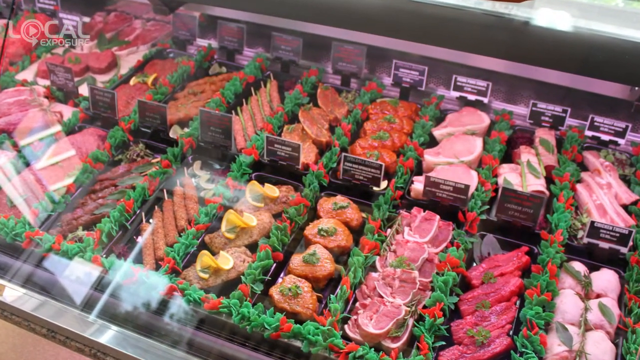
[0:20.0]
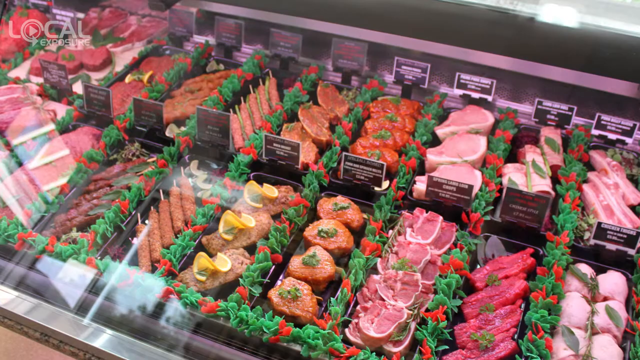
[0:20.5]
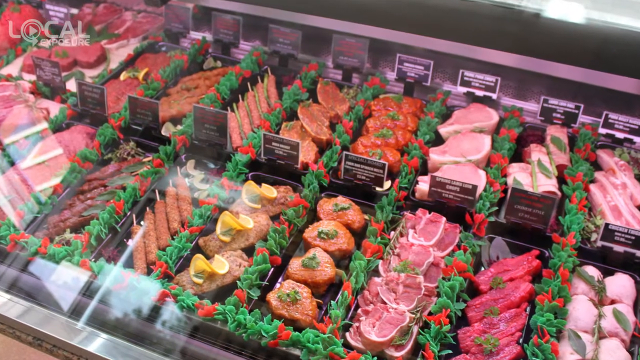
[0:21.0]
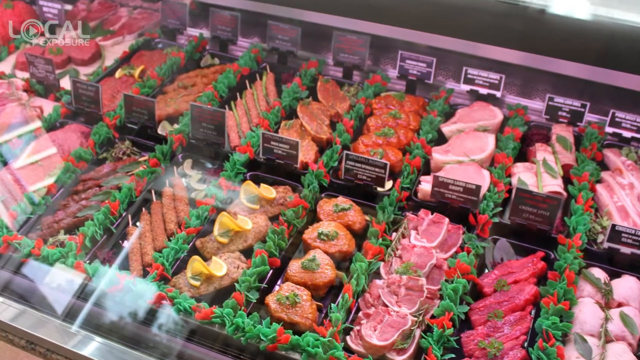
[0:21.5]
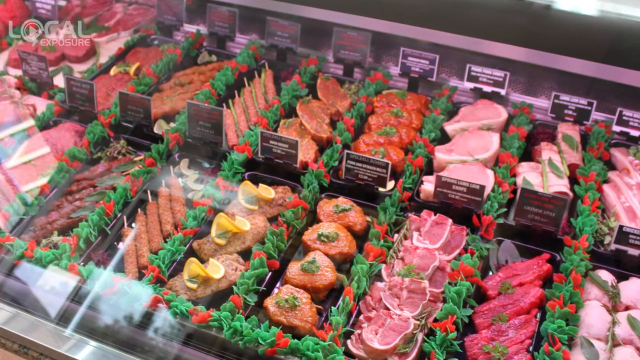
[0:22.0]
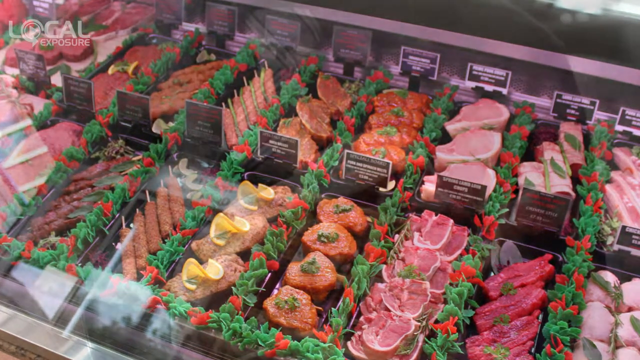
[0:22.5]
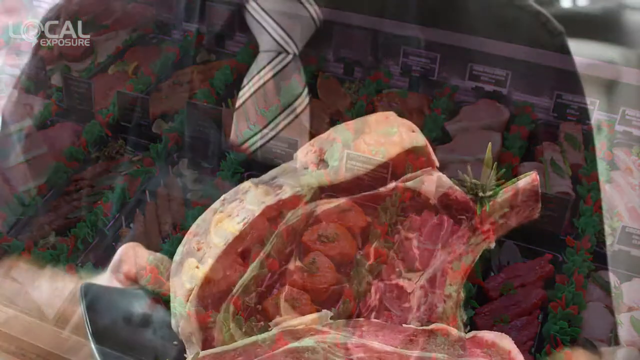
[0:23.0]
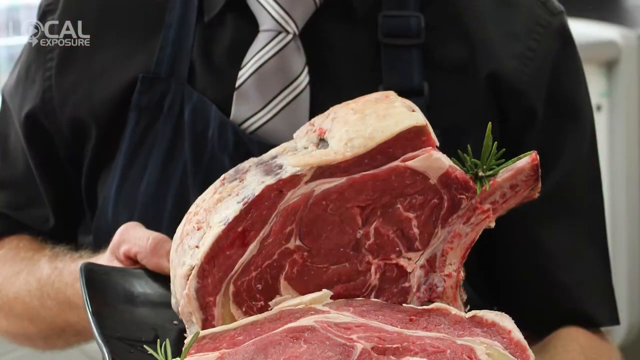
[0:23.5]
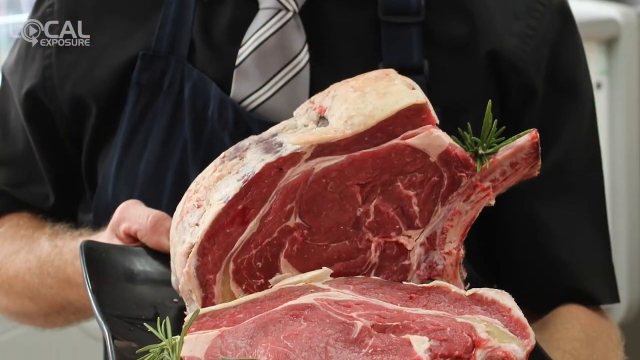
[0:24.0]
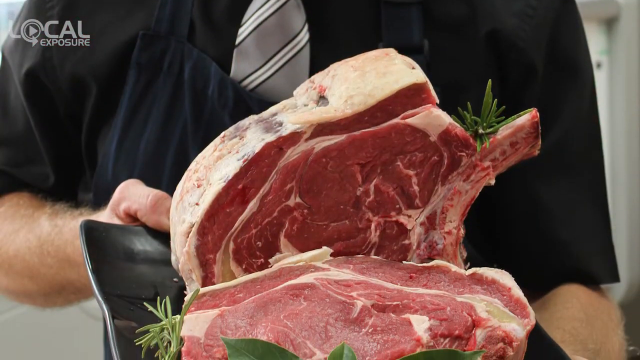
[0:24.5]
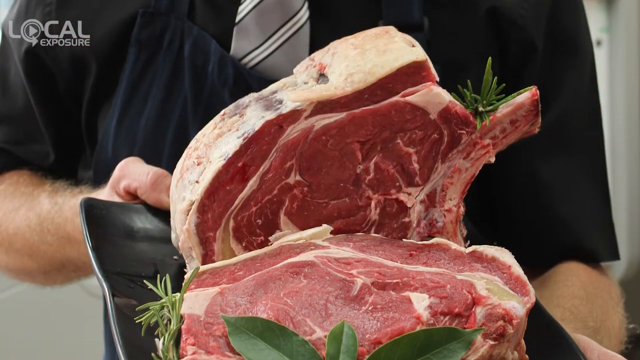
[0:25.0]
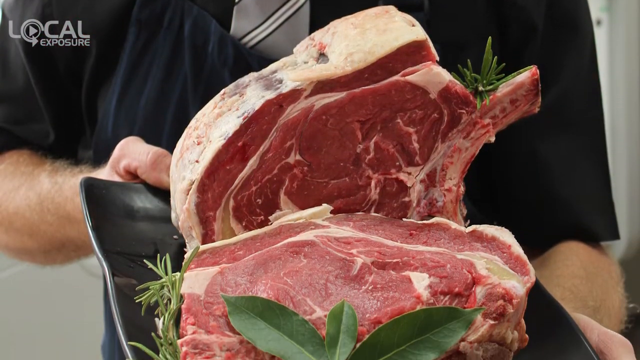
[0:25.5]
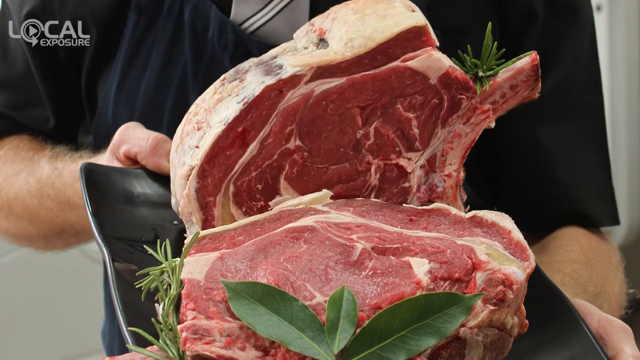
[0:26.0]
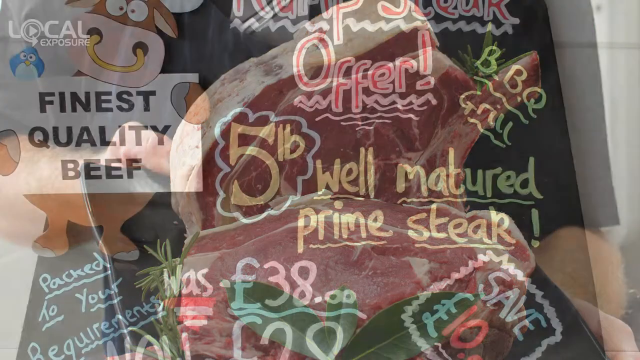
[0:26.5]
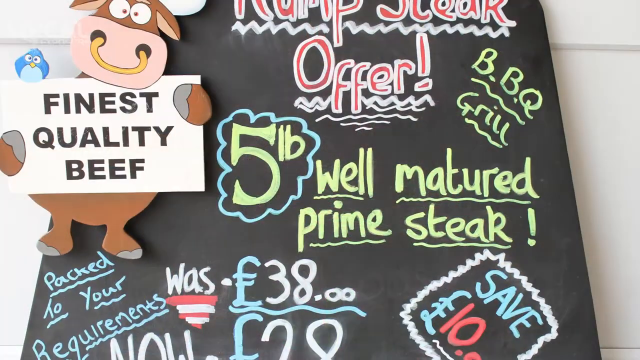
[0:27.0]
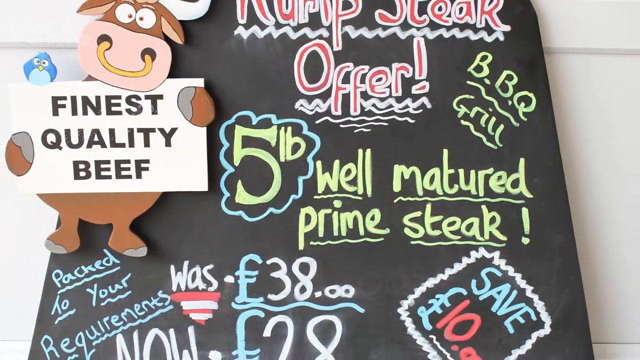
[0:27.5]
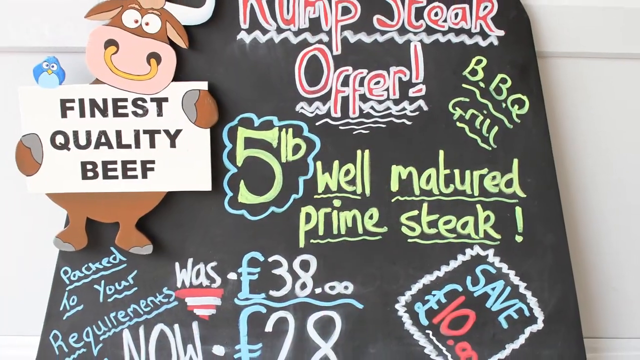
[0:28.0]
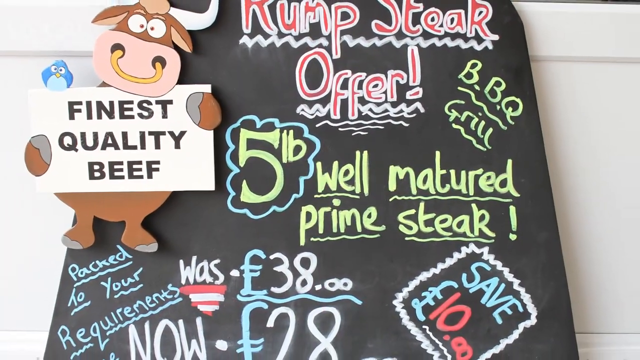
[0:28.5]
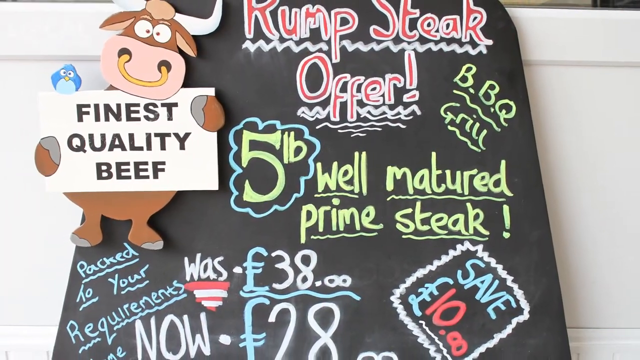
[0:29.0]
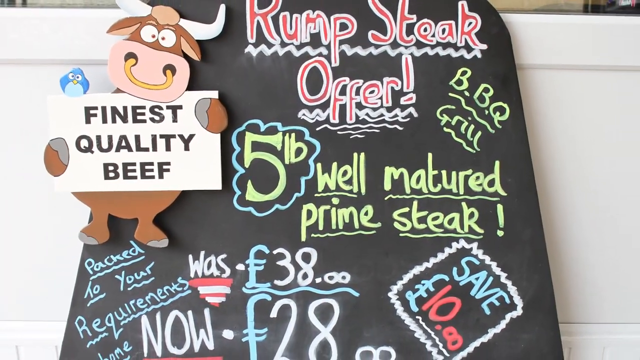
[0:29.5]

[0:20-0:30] More zoomed-in footage shows the meat behind the counter. A zoomed-in image then shows what looks like an employee wearing all black, kind of holding two large cuts of beef on a black plate out toward the camera. In the top left, "local exposure" appears in white. The video cuts to the sign outside, which has a cow on it and says "rump steak offer five pounds". On the left side, the cow holds a little sign that says "finest quality beef", and a little blue bird is on top of that sign. The sign says "rump steak offer 5 pound well-matured prime steak barbecue grill", then says the price was $38 and is apparently now $28, and on the right side it says "save $10". It is a black sign with what looks like chalk on it.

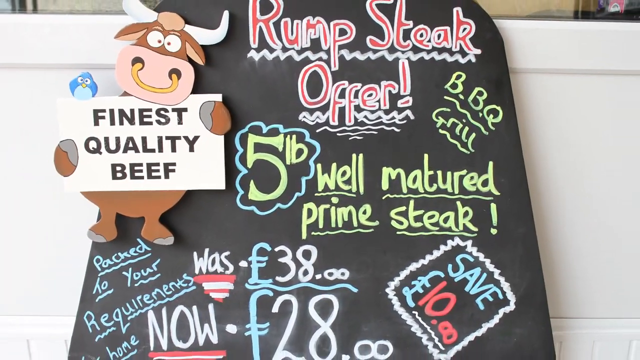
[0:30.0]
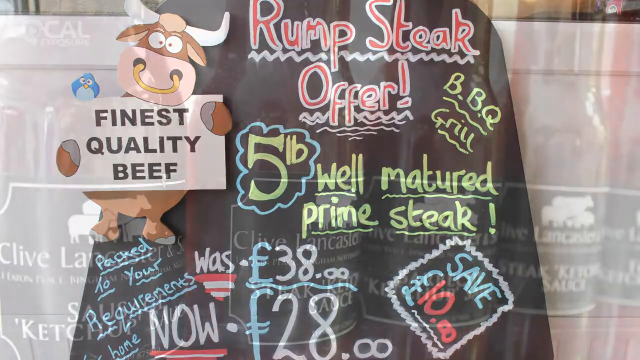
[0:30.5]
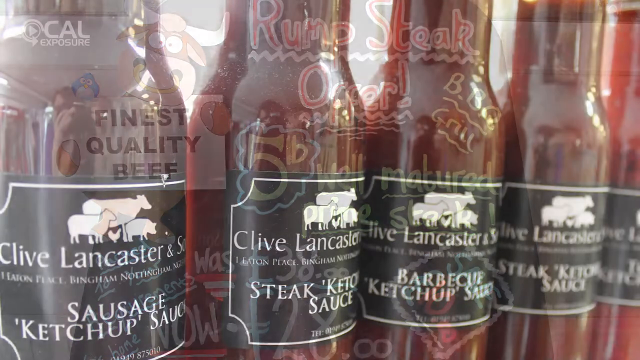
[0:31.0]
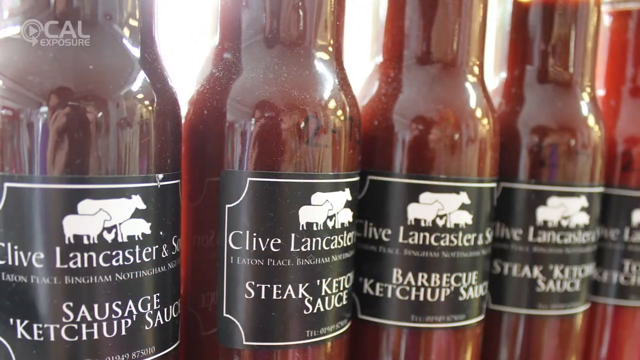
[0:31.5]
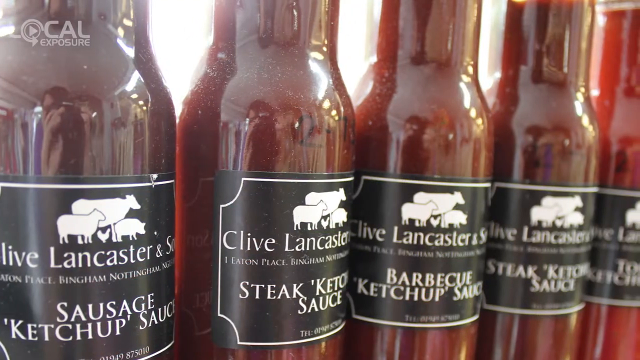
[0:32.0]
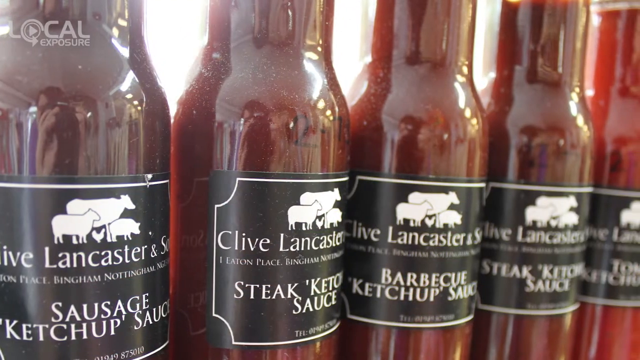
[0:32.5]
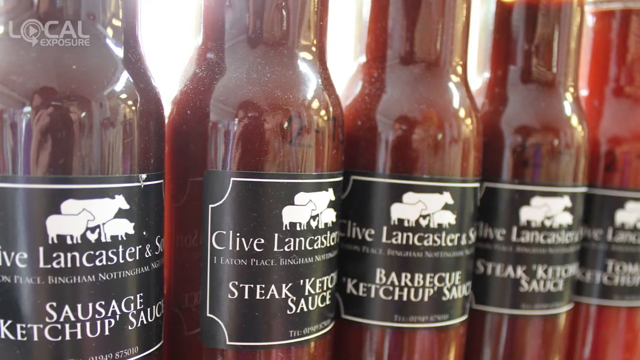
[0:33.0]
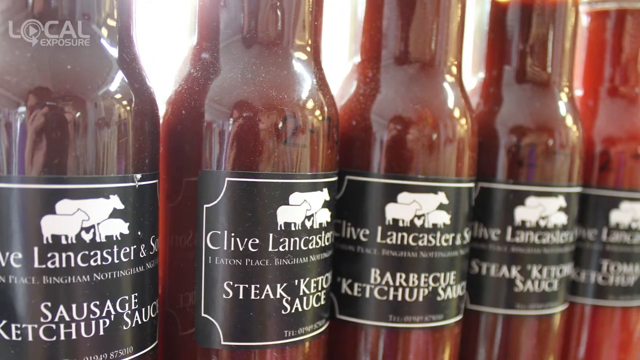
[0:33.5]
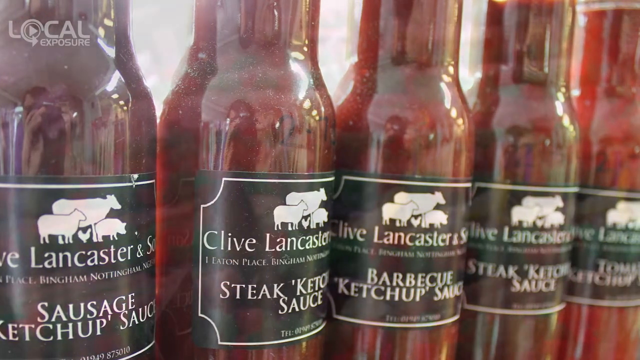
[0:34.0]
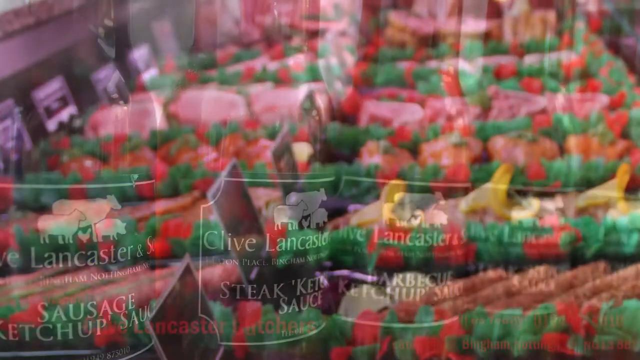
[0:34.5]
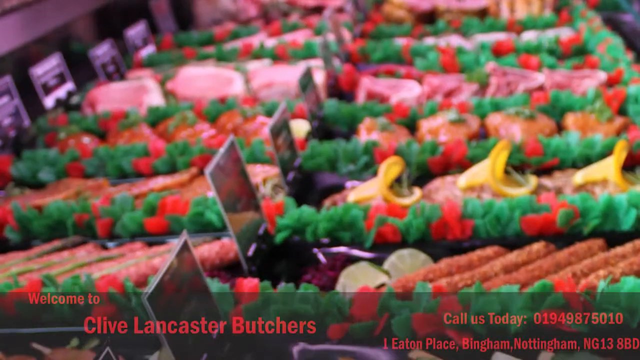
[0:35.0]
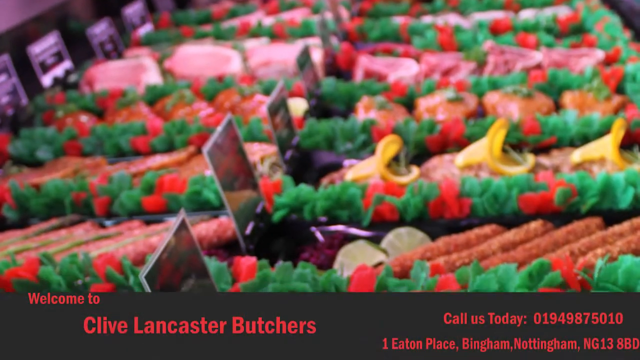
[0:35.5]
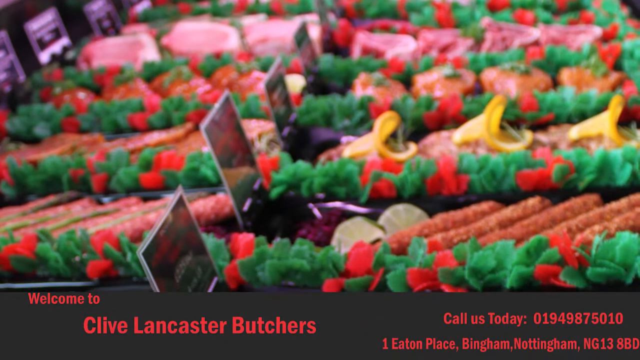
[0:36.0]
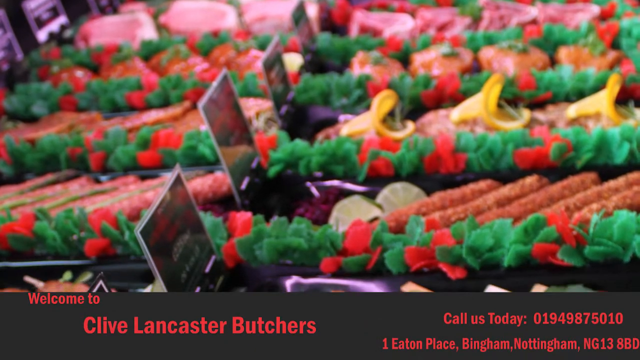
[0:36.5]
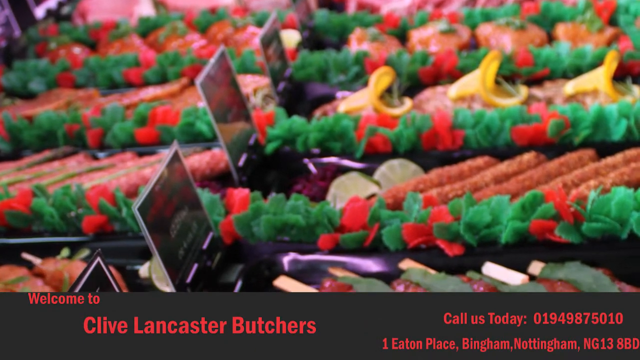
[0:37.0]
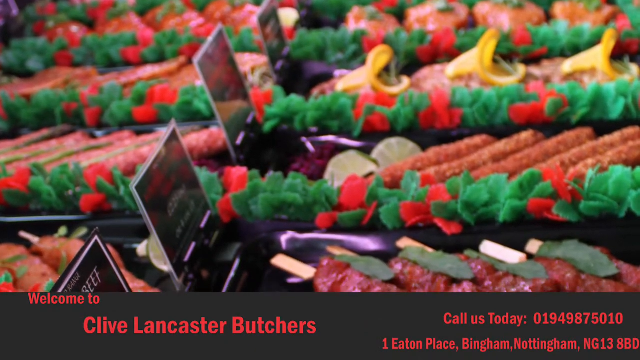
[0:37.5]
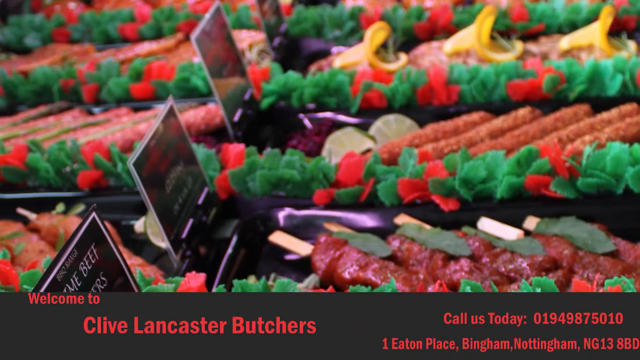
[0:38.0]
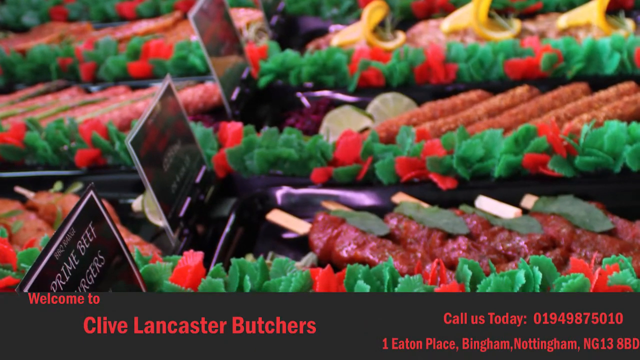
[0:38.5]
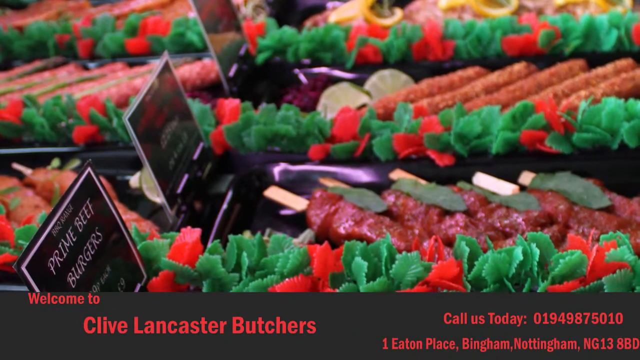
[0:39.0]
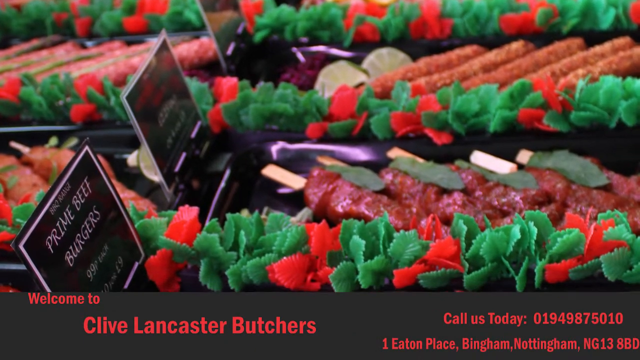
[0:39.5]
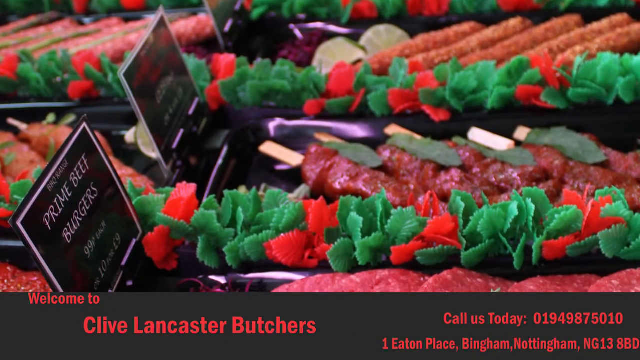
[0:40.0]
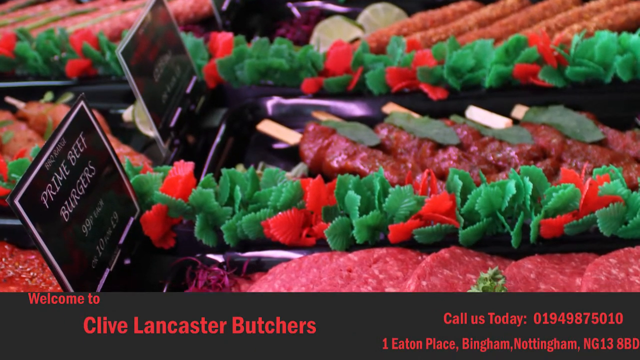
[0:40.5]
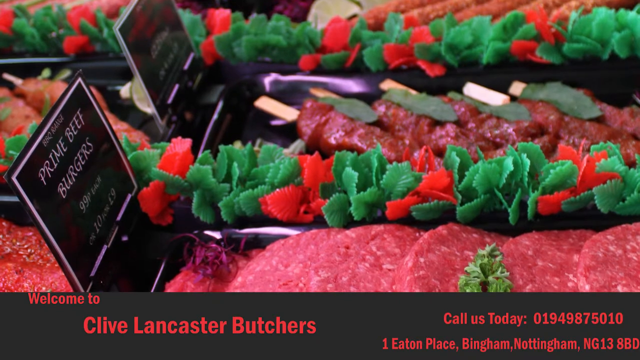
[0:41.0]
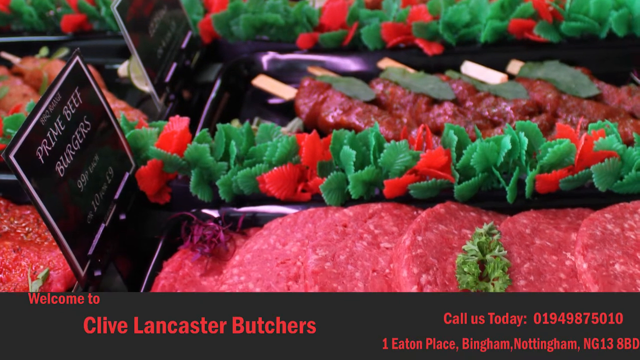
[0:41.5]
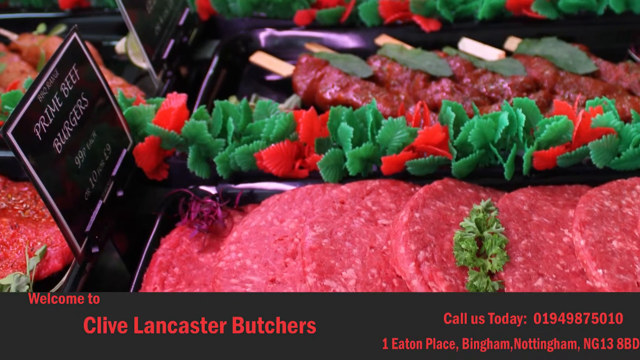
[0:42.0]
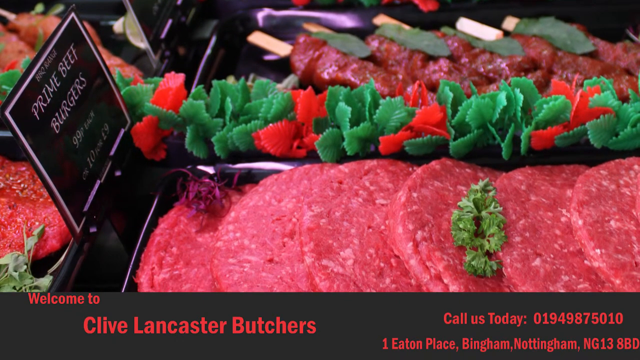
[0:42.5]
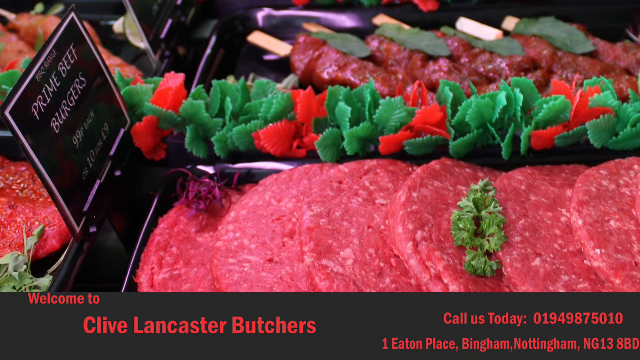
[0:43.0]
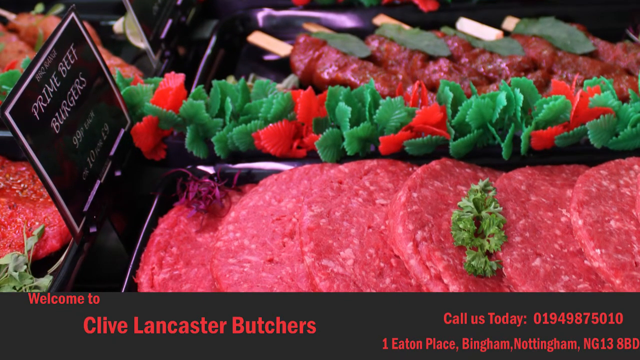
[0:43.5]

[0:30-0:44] The video kind of focuses on the sign, then shows what looks like some kind of sauces labeled "steak ketchup sauce" and "barbecue ketchup sauce". These are bottles of a dark sauce with a black label, and they are Clive Lancaster's. The camera kind of pans from left to right across the sauces, then scrolls down. A different image follows, panning down over different beef behind the counter. At the bottom, text says "welcome to a Clive Lancaster butcher" along with the phone number 019-498-75010. The video is a promotional clip for the butcher Clive Lancaster's, located in Bingham, Nottingham, apparently in the UK.